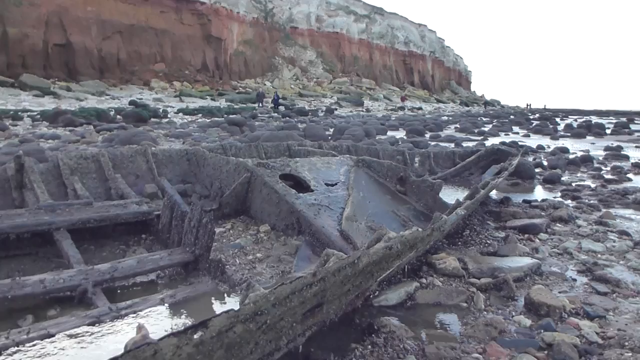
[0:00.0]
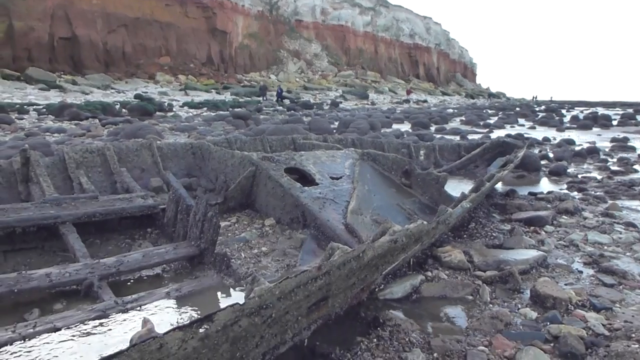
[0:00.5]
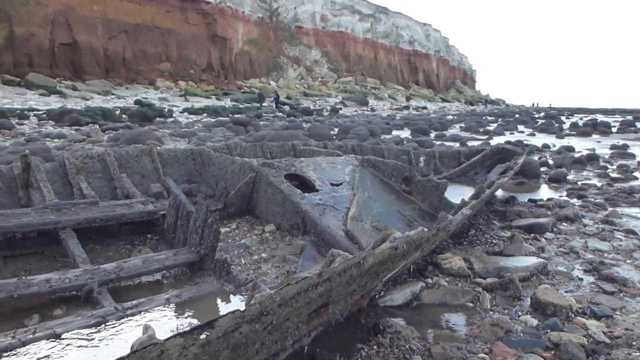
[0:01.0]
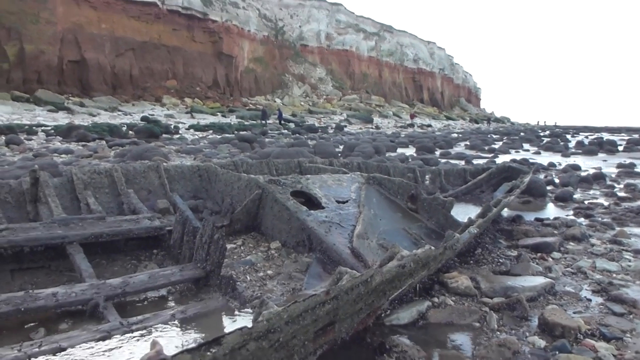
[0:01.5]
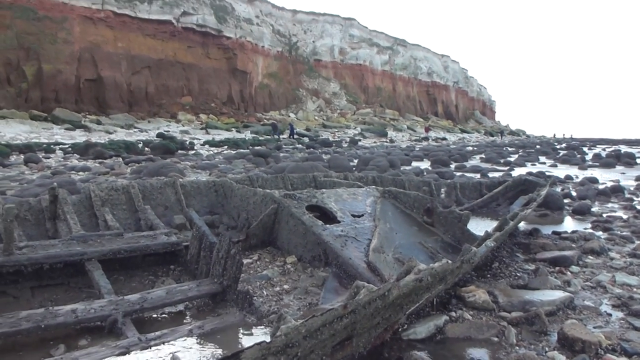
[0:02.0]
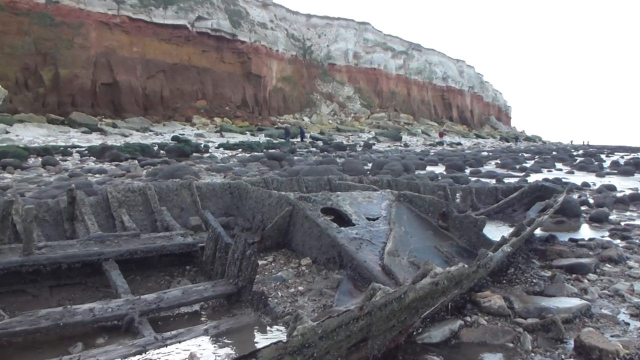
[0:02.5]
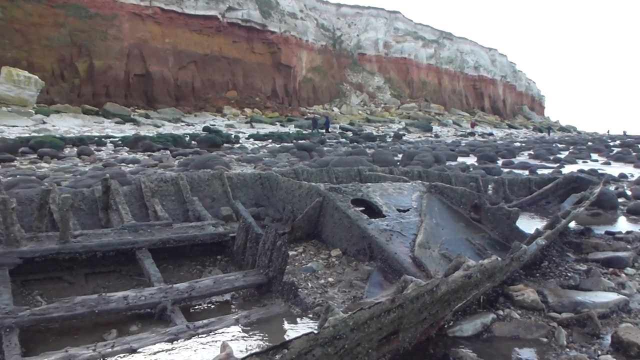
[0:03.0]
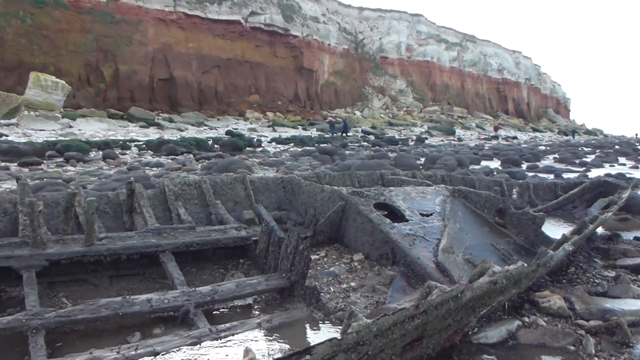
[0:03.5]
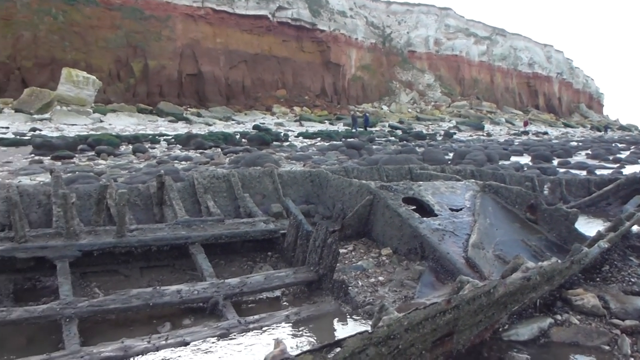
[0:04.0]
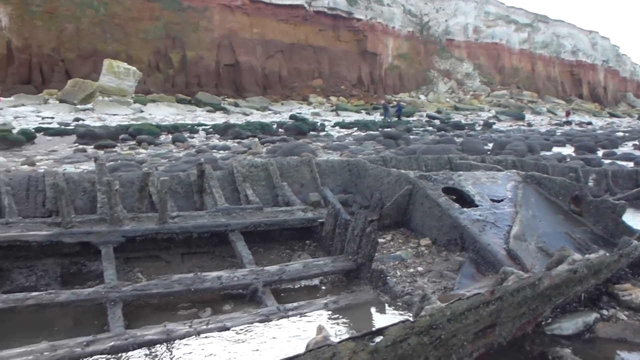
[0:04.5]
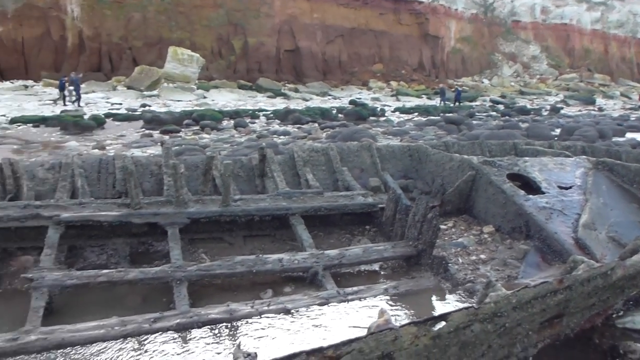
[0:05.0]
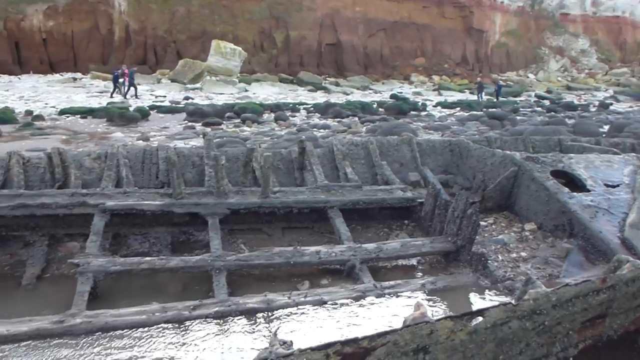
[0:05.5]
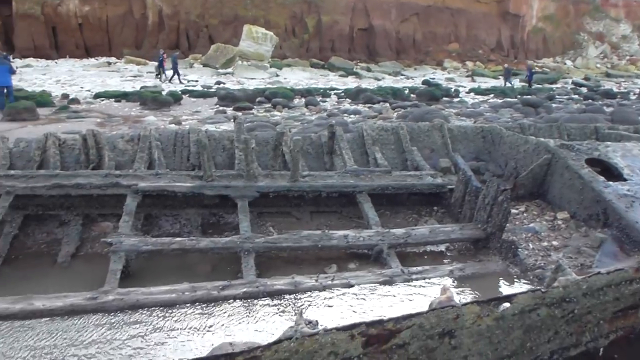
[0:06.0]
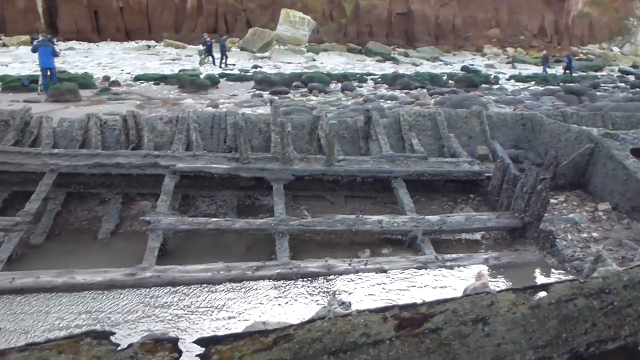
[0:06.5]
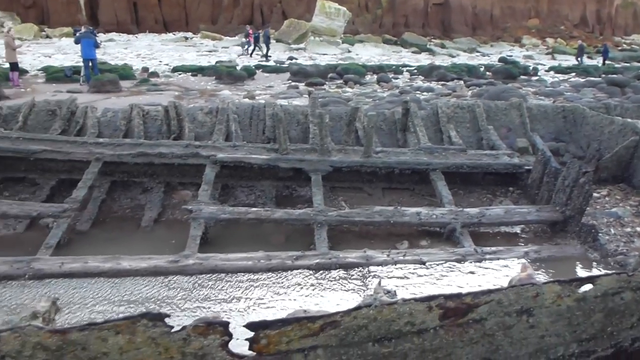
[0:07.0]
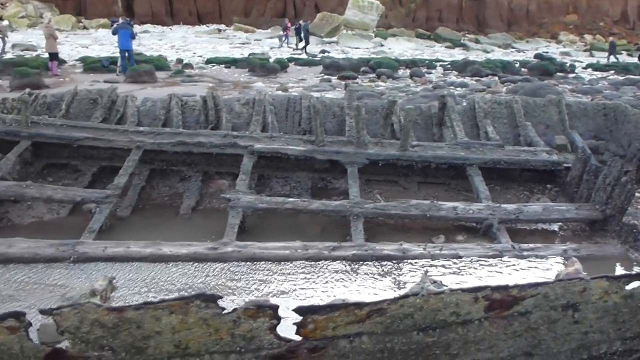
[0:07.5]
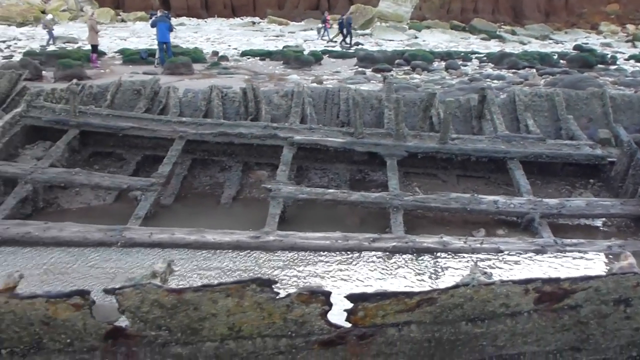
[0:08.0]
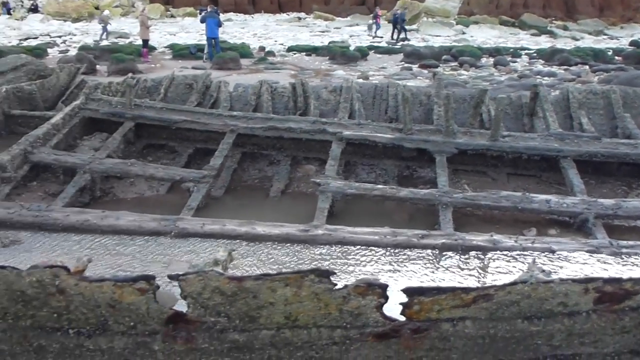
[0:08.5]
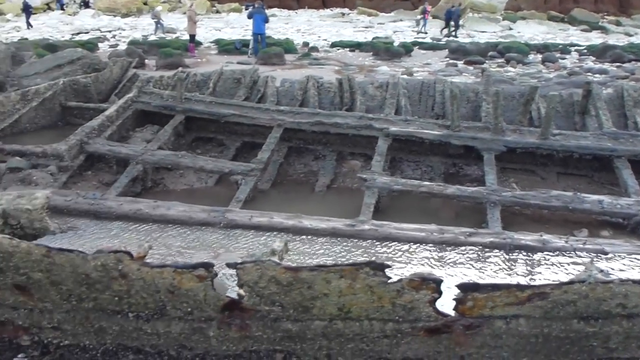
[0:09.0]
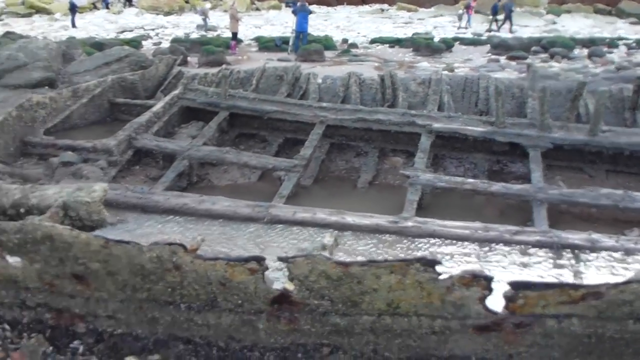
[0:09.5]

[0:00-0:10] A rocky beach lies at the base of a mountain whose top is sort of gray, turning a brick red color lower down. There is one lone tree on the beach. There is also wreckage here that looks like an old boat that was either left to rot or pulled here. People walk in the distance. The rocks still in the water are a shale color, and closer to the base of the mountain they become lighter, almost white; there is a marked difference between the wet rocks and the white and gray ones at the base of the mountain. The sky is white and hazy with no blue visible. The water is murky and shallow, and the tops of the rocks can be seen above it.